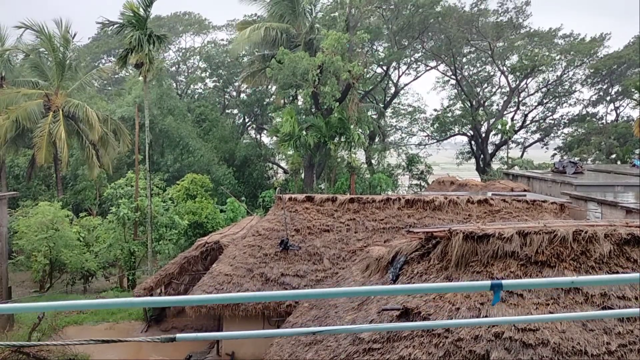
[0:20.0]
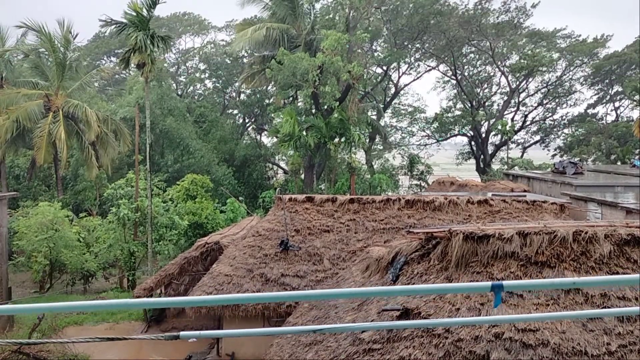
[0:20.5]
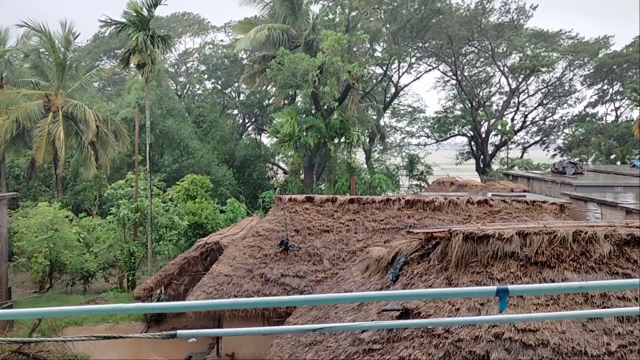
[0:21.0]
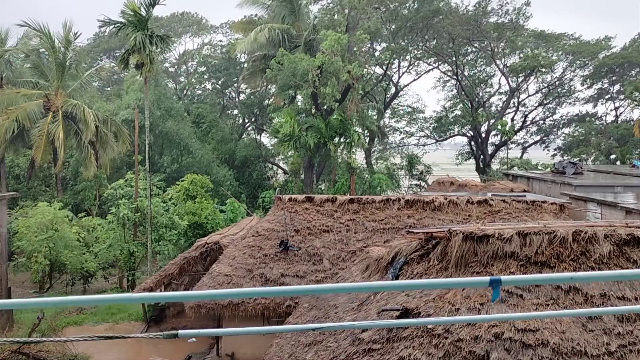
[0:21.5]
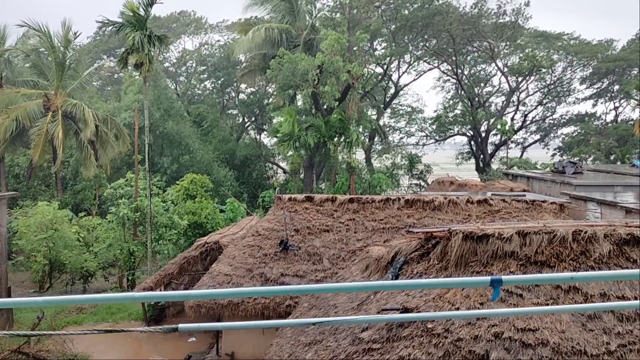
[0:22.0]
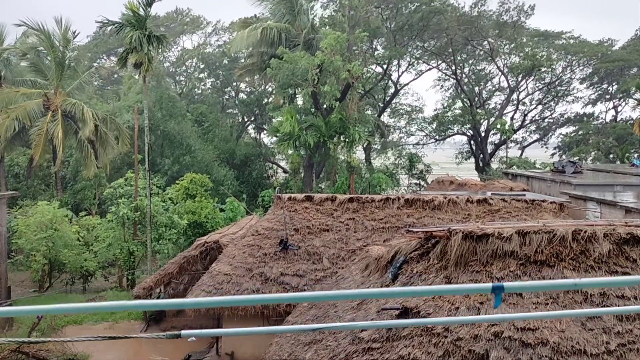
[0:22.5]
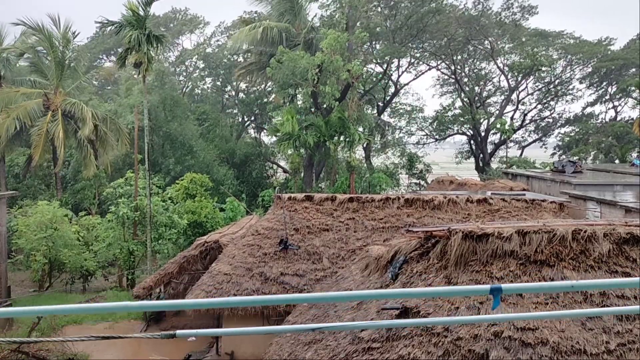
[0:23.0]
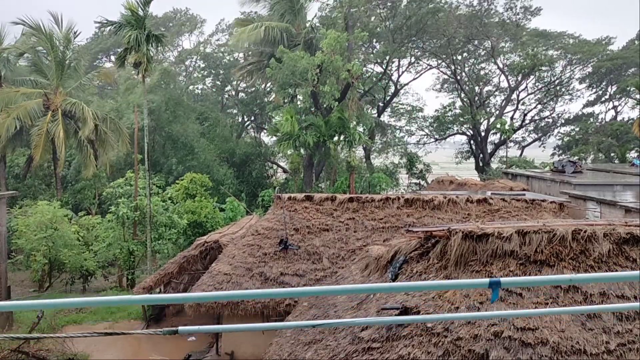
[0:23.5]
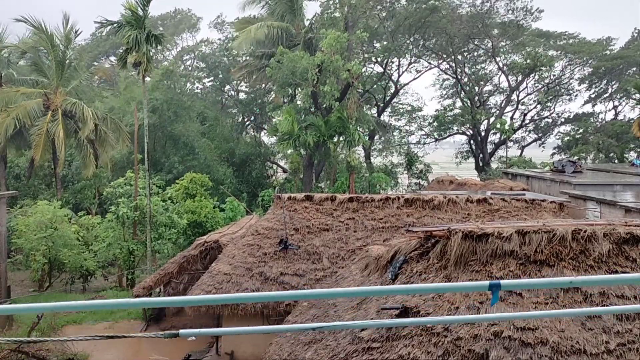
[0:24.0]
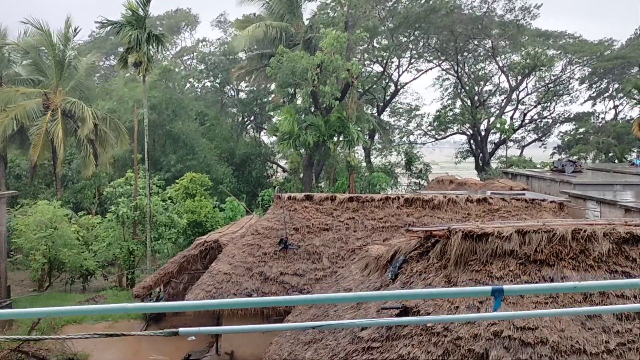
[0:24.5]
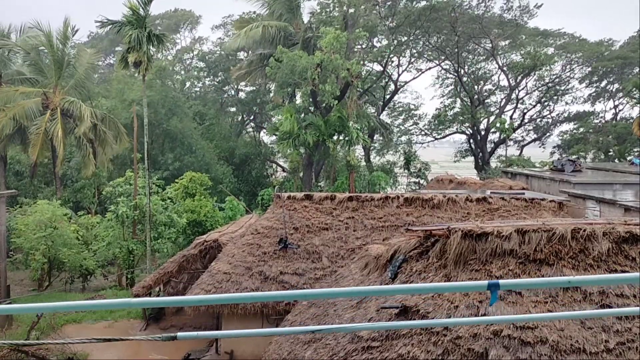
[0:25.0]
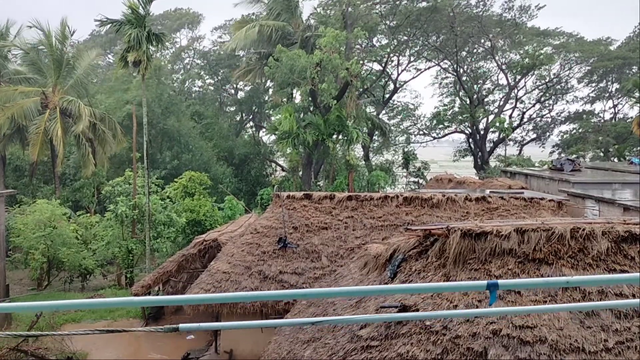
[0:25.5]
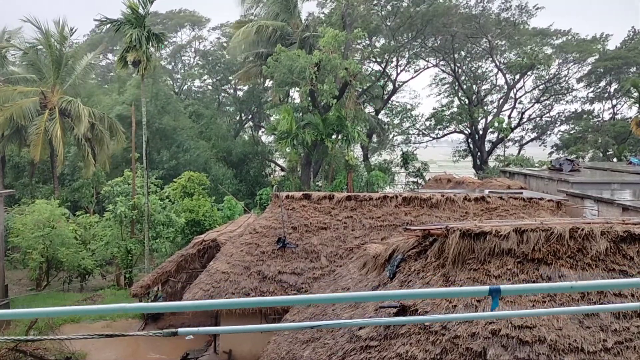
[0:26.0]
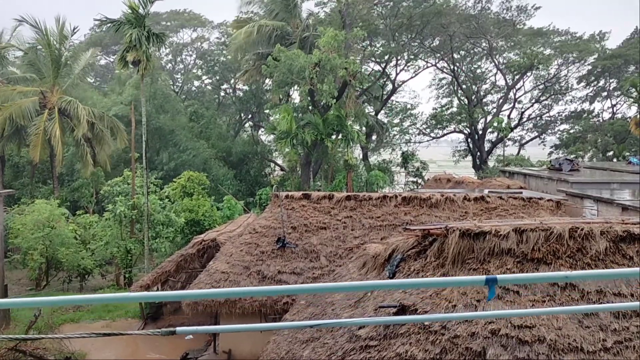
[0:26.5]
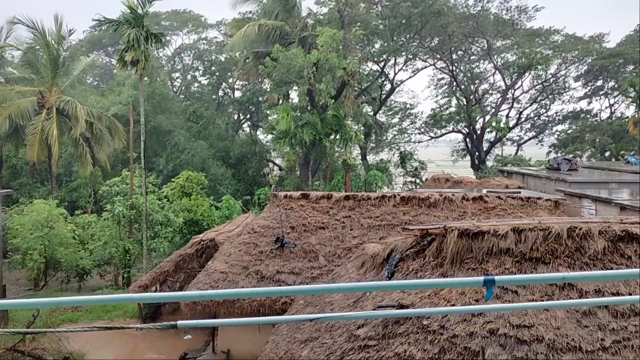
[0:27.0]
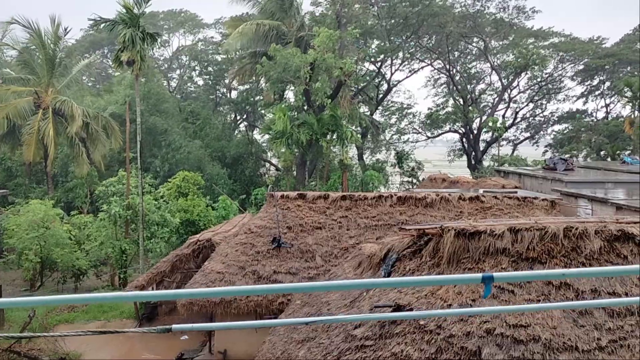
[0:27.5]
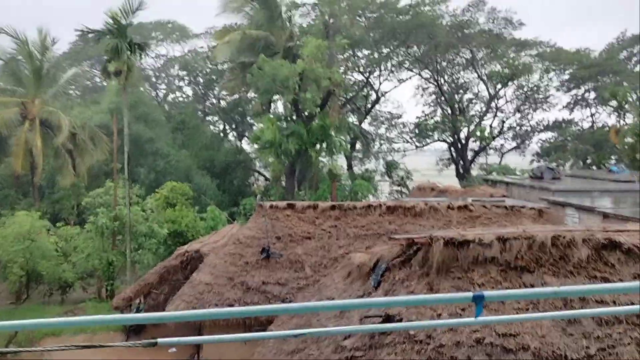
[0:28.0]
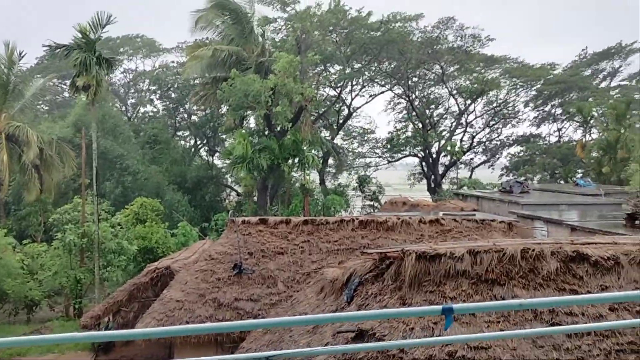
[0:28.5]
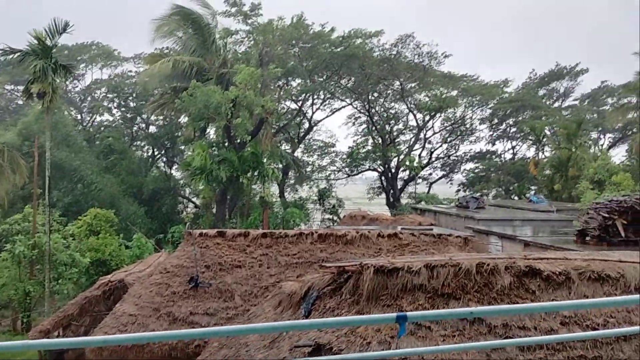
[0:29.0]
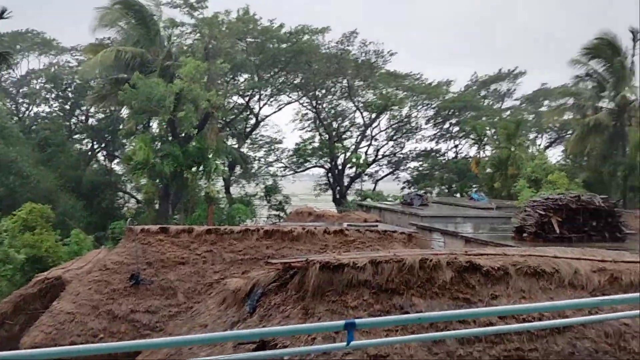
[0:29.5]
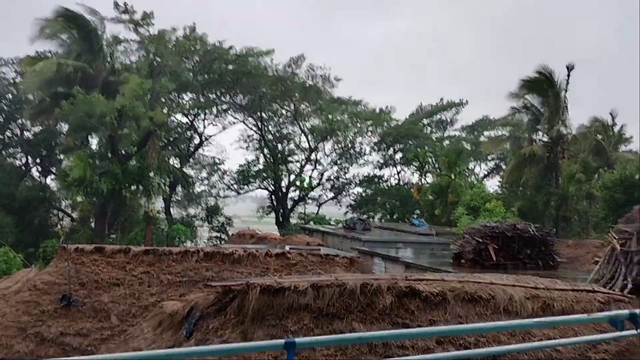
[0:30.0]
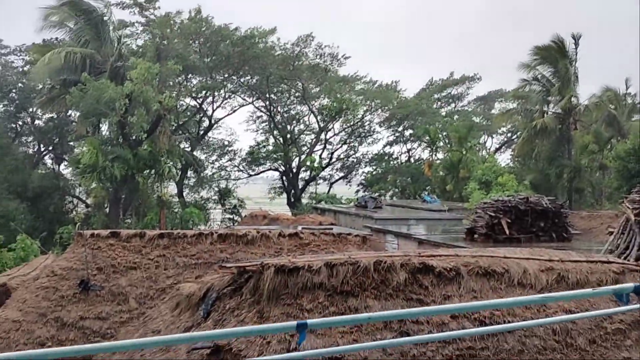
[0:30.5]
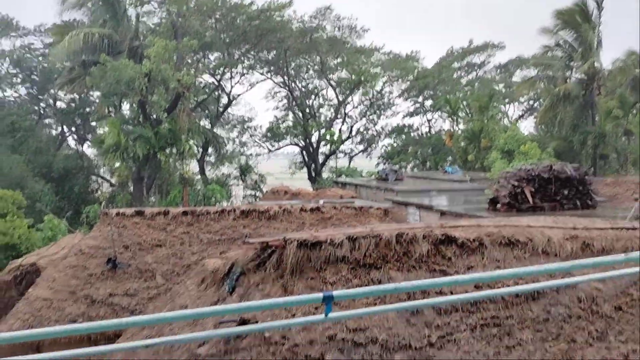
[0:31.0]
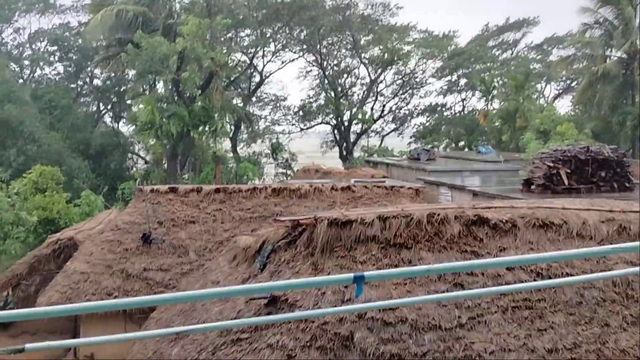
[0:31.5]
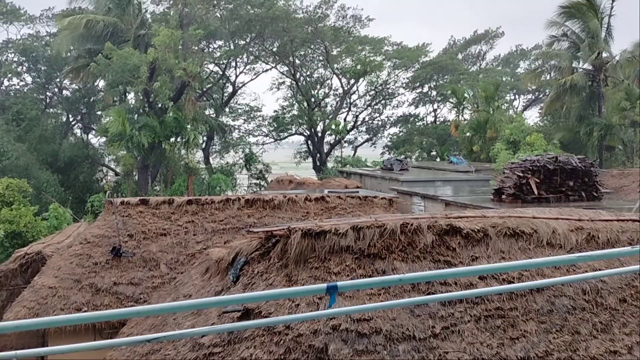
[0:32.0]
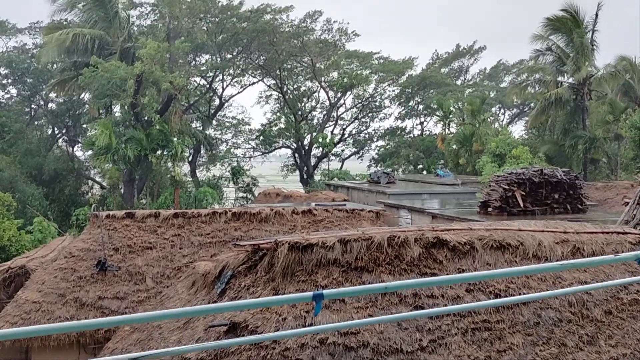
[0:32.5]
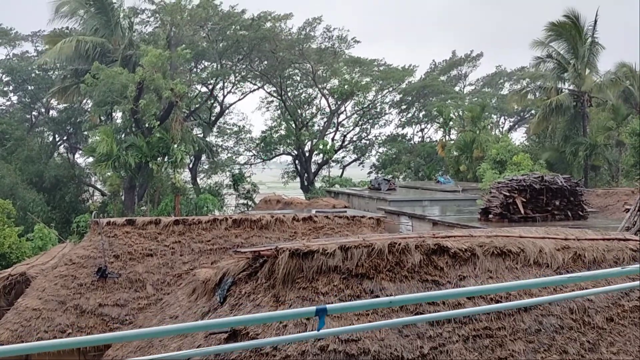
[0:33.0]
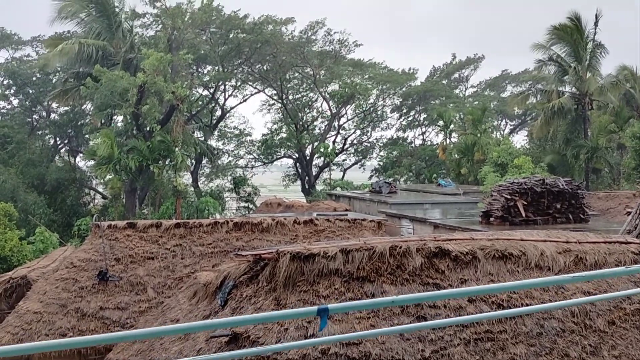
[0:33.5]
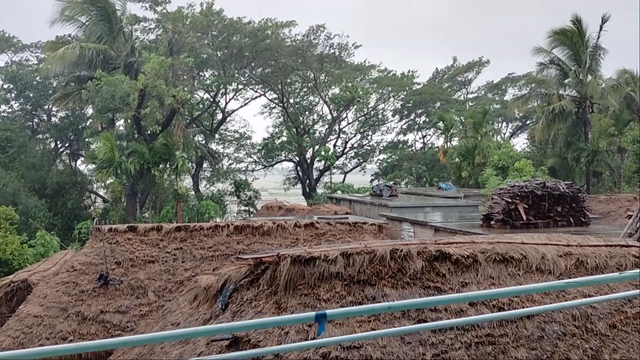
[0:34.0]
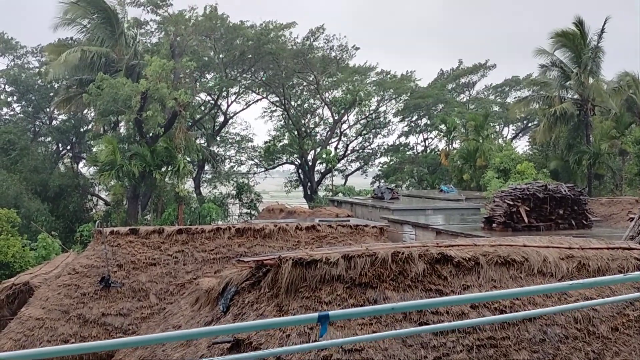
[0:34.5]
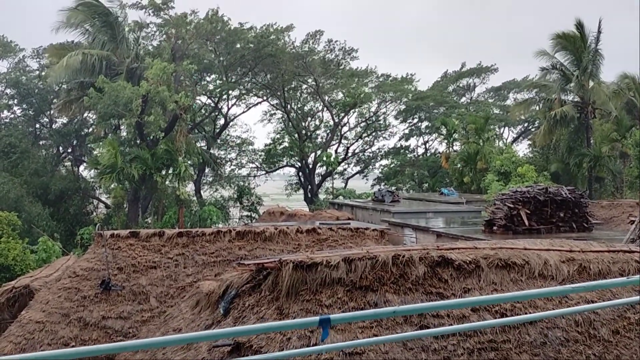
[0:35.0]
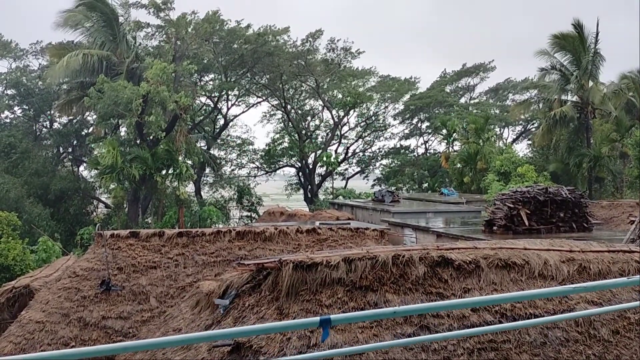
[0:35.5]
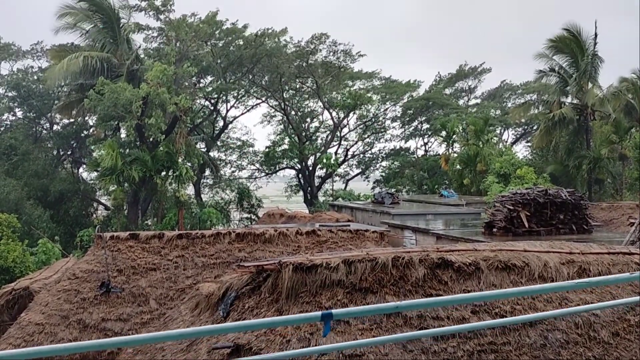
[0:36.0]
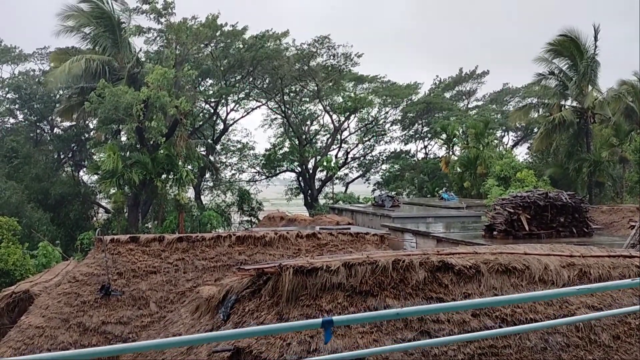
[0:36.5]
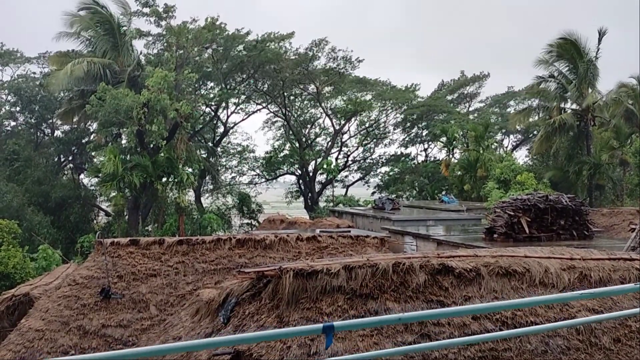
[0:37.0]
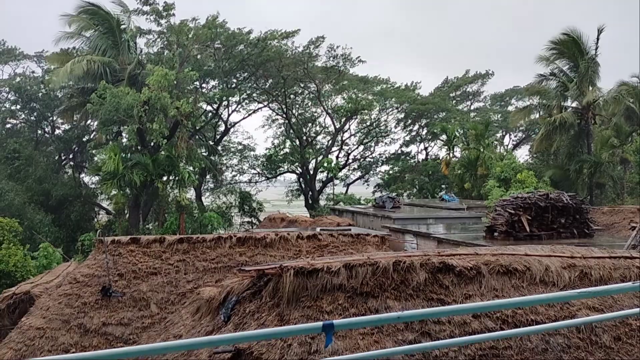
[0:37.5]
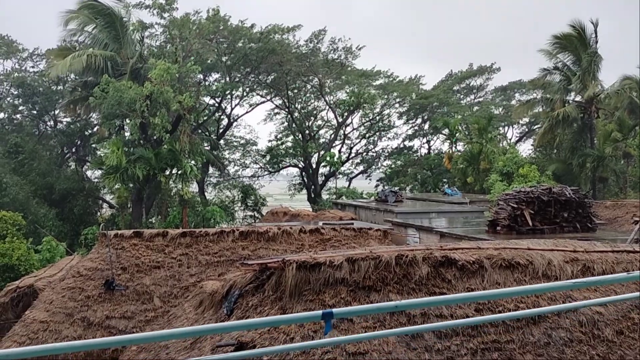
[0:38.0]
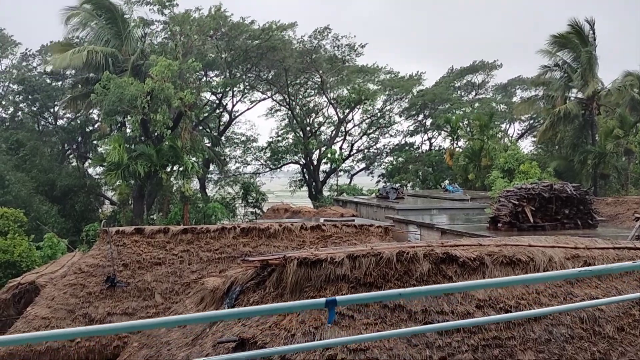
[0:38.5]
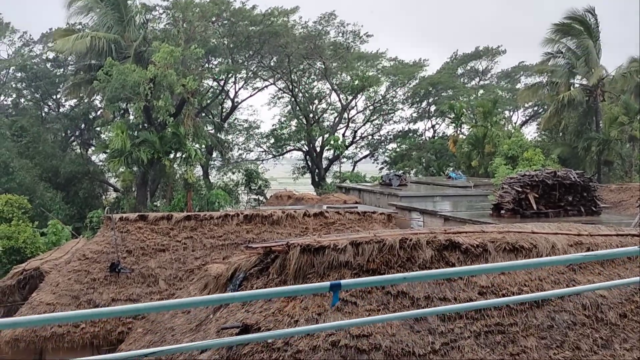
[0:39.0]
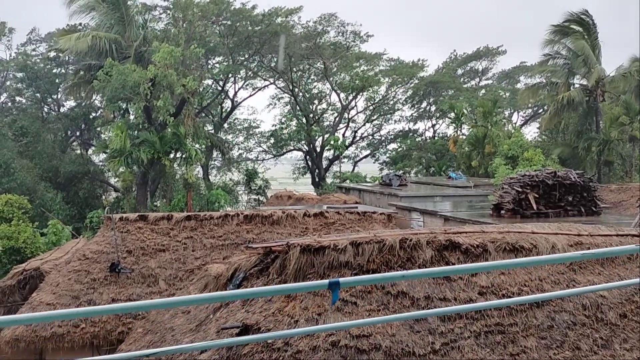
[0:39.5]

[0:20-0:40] The palms and trees are still going slightly back and forth, and some drops of rain can now be made out falling; it is not raining hard, just a light drizzle or a spotty shower here and there. The ground is visible. The camera shifts to the top area of the buildings, showing a wet surface with a slight reflection of the sun, but it is overcast, so it reflects gray. A pile of what is probably wood and vegetation is right next to the roof area of the house up top. Possible water, maybe ocean, is in the background, very faded in the distance, and the sky is visible too, making the area look like it could be a remote island or an island in general. Smaller trees are next to the house or shelter.